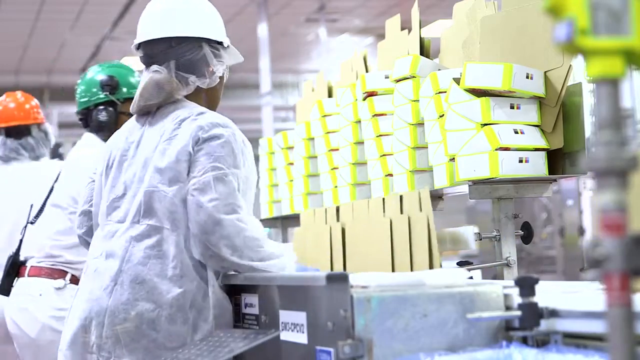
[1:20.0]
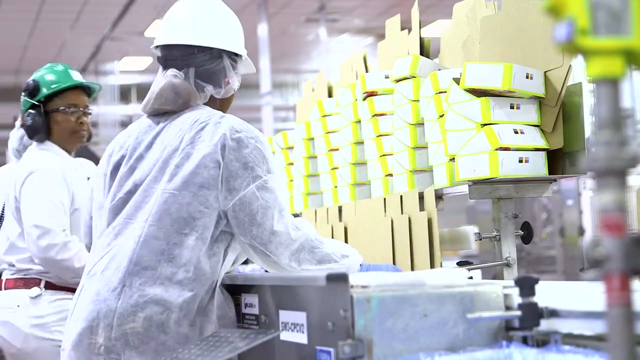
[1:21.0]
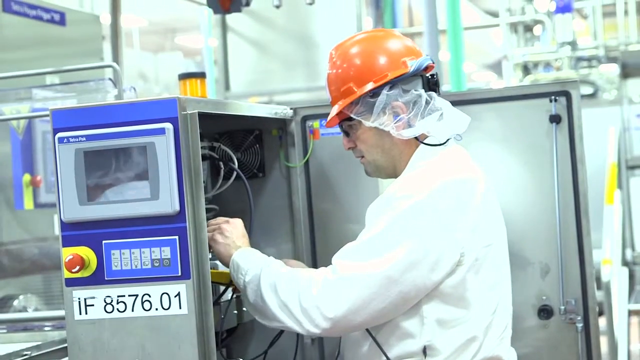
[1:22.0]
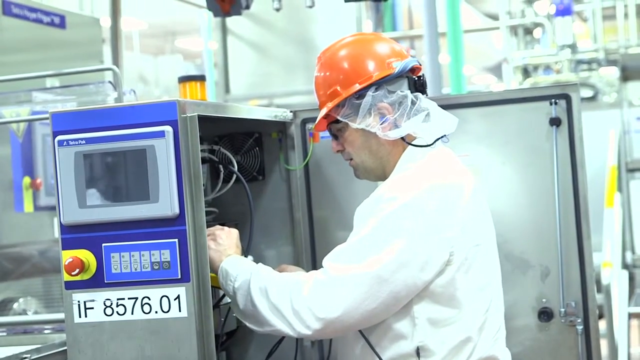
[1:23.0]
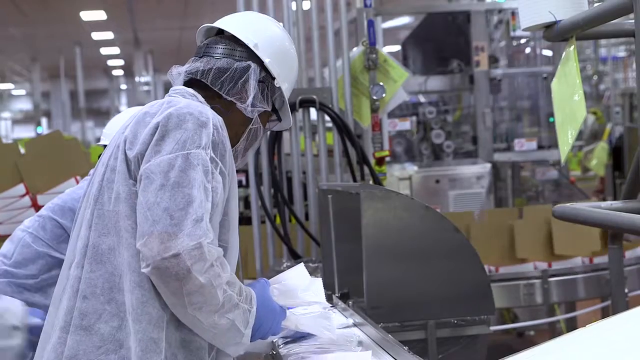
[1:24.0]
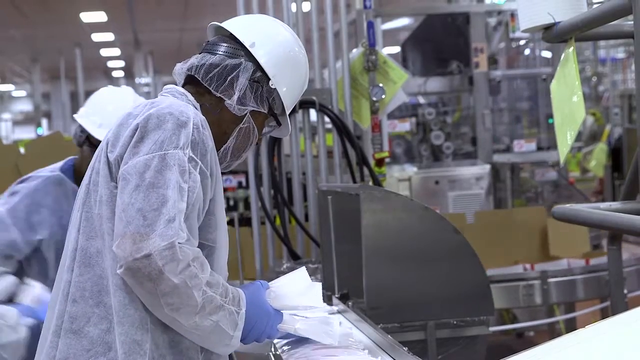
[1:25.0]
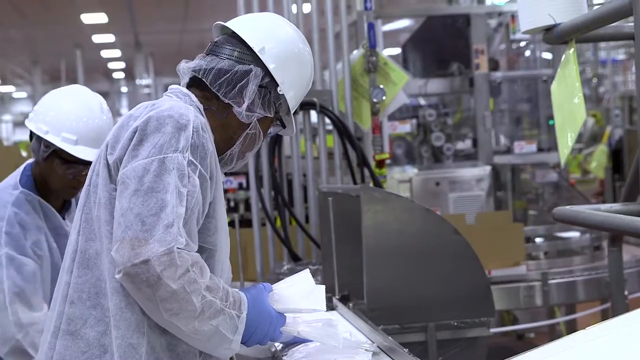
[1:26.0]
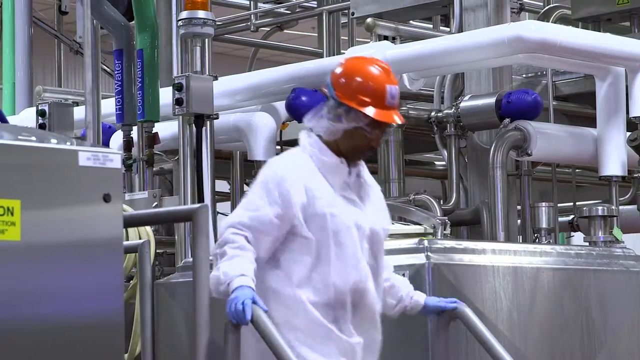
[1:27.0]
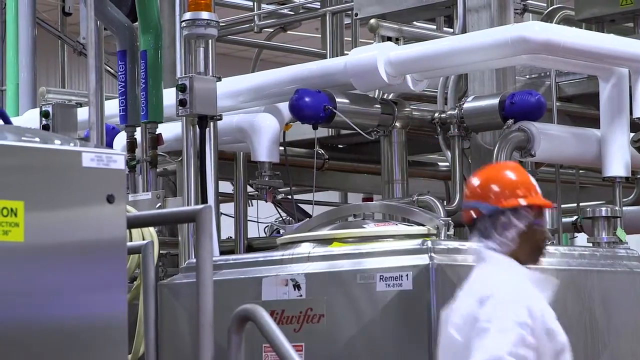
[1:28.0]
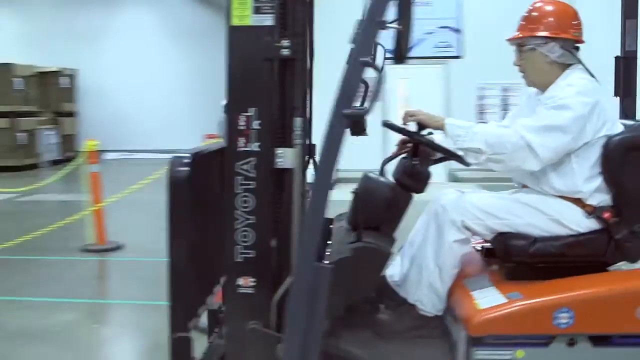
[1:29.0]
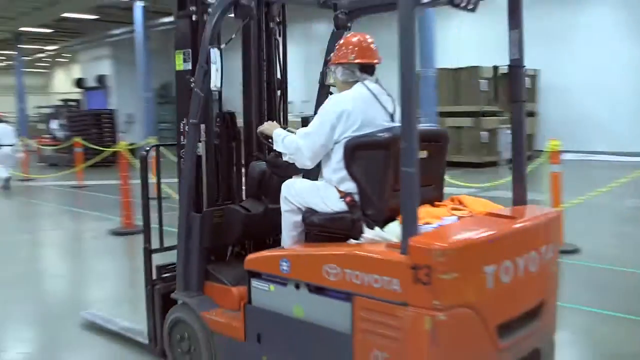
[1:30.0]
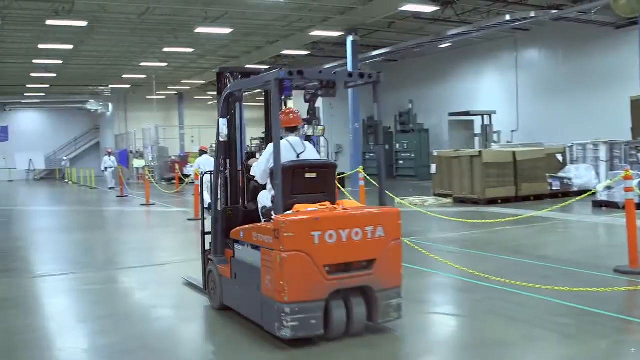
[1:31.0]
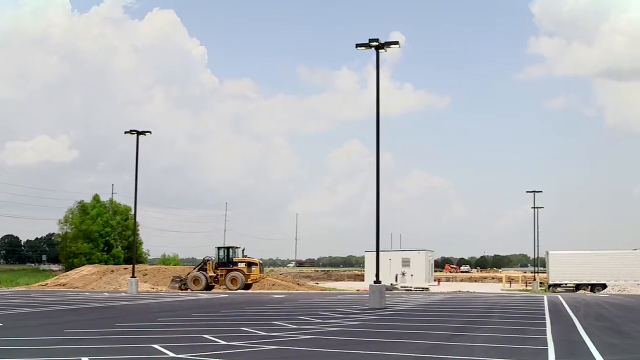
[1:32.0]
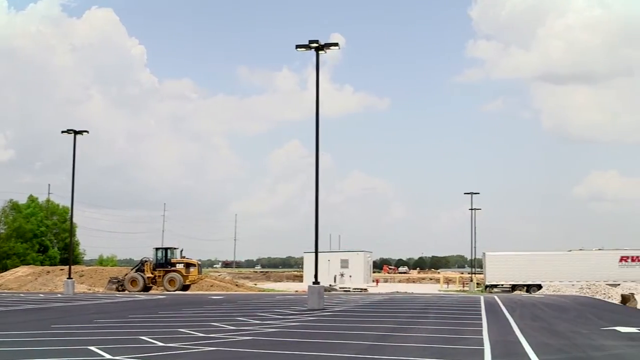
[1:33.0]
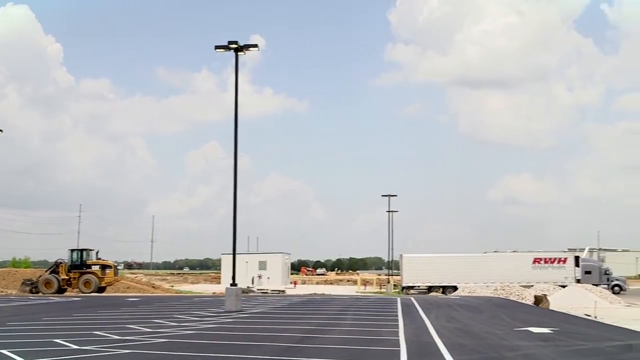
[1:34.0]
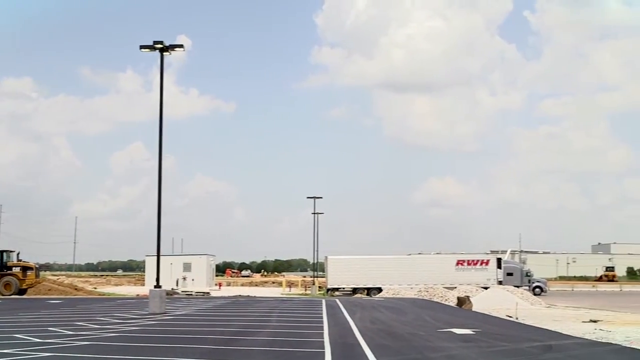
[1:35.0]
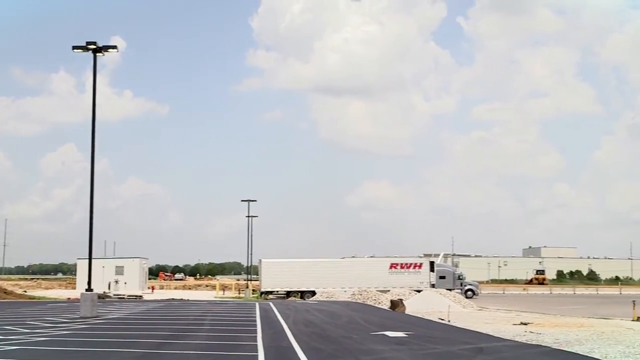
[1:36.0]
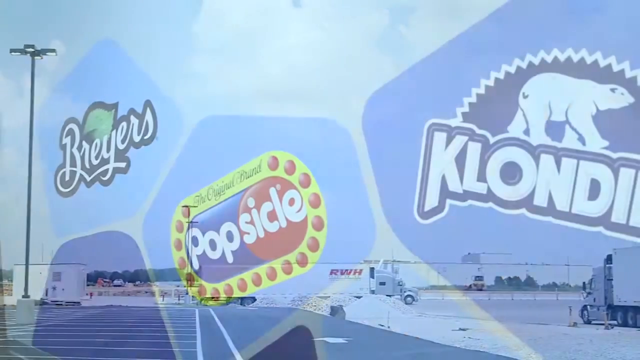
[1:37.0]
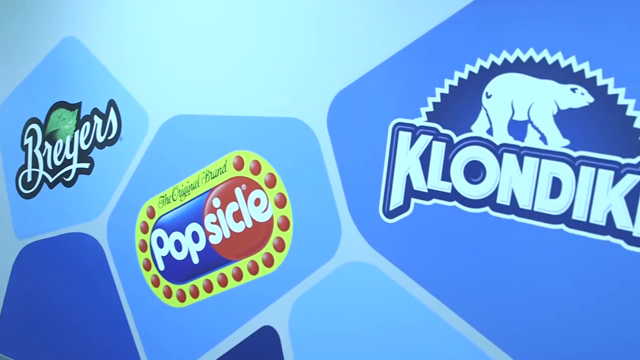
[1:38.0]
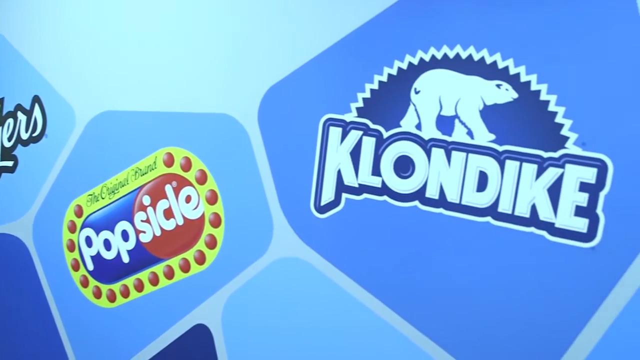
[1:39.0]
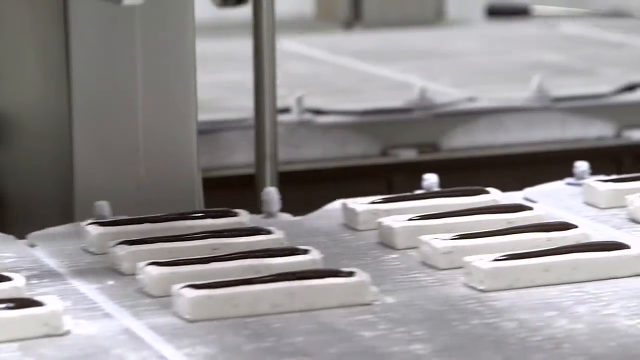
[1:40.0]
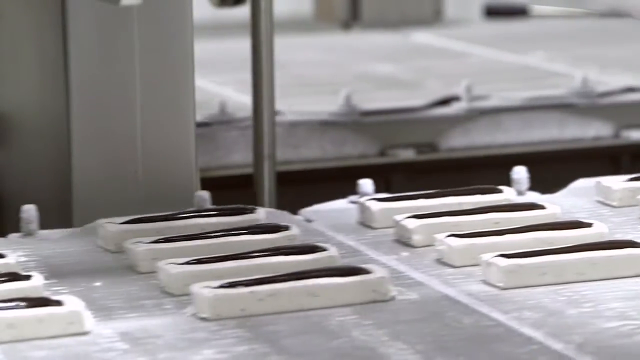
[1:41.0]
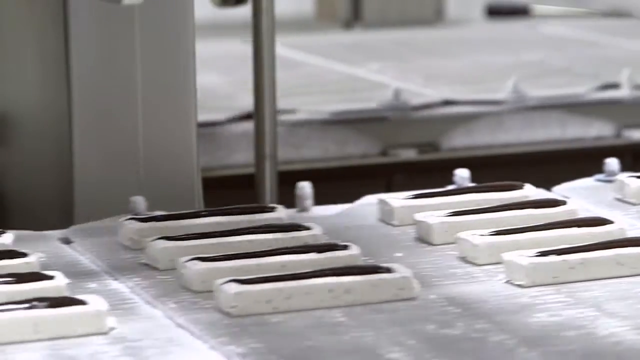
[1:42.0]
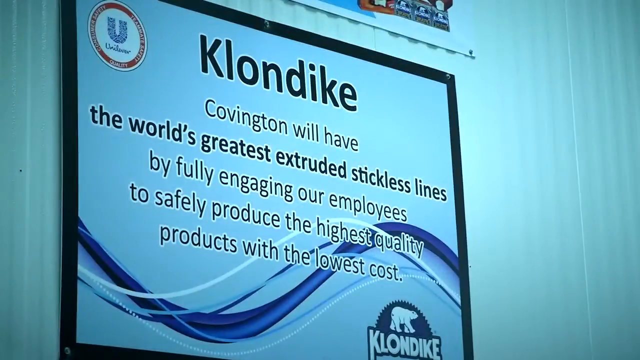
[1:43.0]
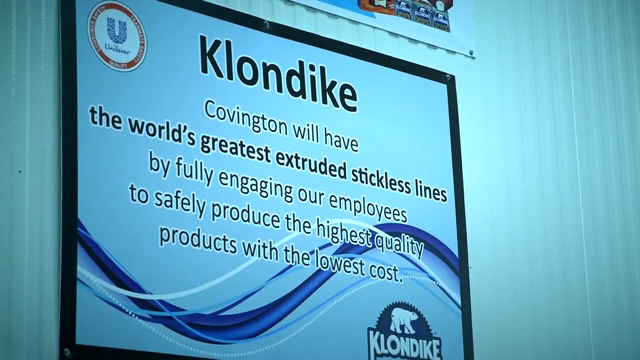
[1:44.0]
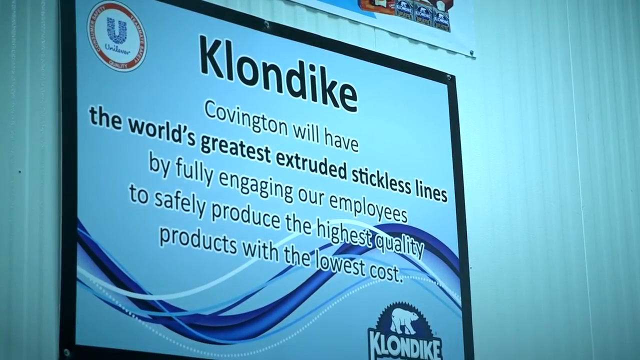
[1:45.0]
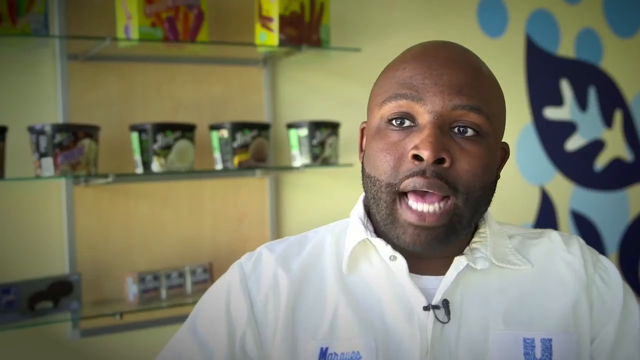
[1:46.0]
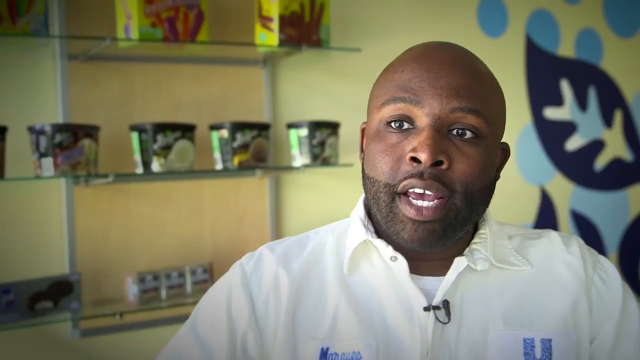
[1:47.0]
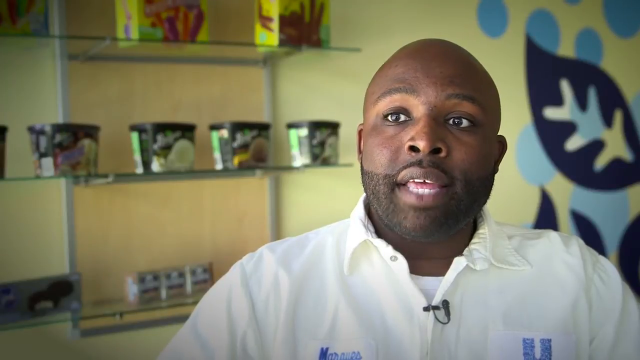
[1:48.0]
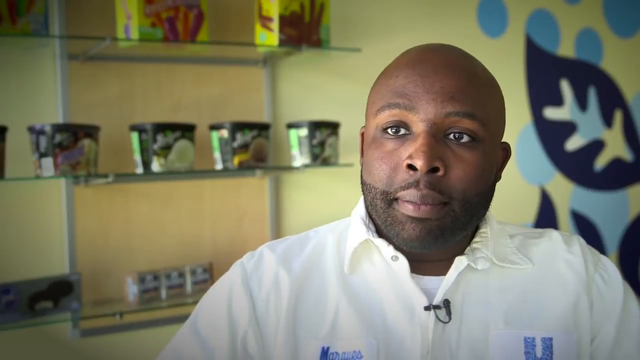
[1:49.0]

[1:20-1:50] A last zoom-in shows what appears to be the Breyers ice cream. It sits next to a Sara Lee collaboration with Breyers, and the cost is highlighted on a yellow price tag: the Breyers chocolate flavor costs $4.99 with the card, while its original price is $6.29. The video transitions back to the lab, showing Klondike bars original sold together in a package of 6. Next, a female factory worker who appears to be wearing a hairnet, goggles and an orange helmet appears to be chewing on the ice cream. Having opened the wrapper, the ice cream is crumbling around her hand. She takes a bite, looks happy and smiles. Other workers are visible as well.